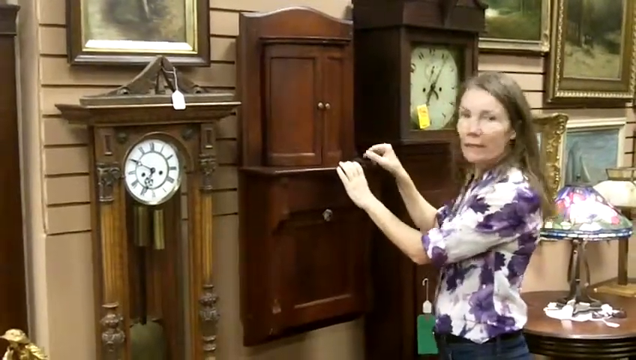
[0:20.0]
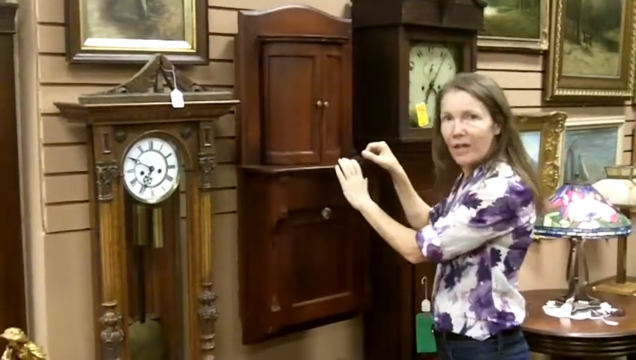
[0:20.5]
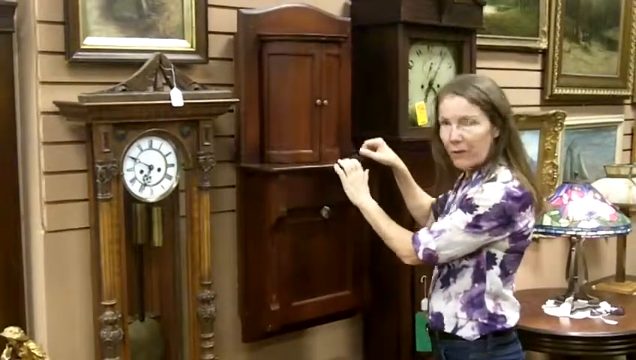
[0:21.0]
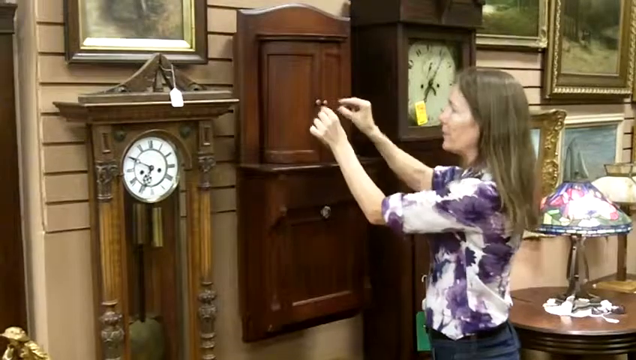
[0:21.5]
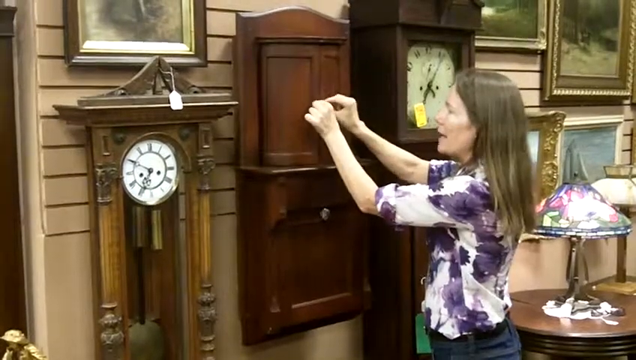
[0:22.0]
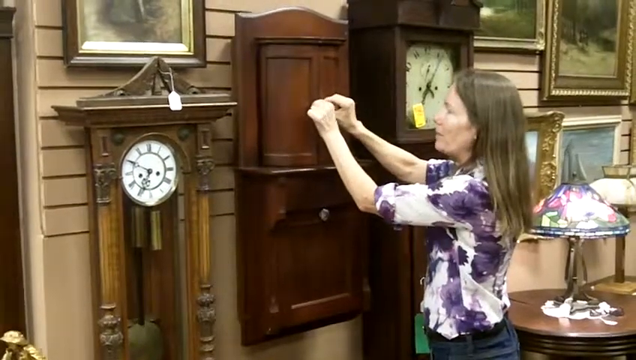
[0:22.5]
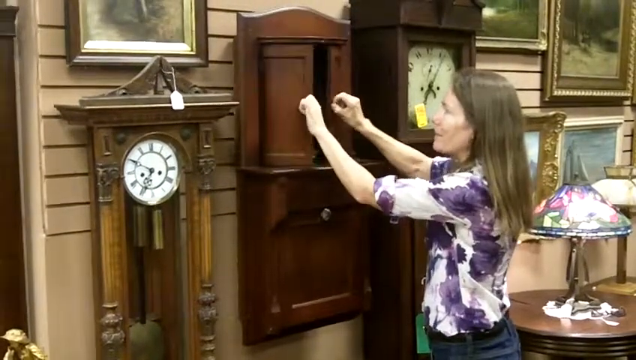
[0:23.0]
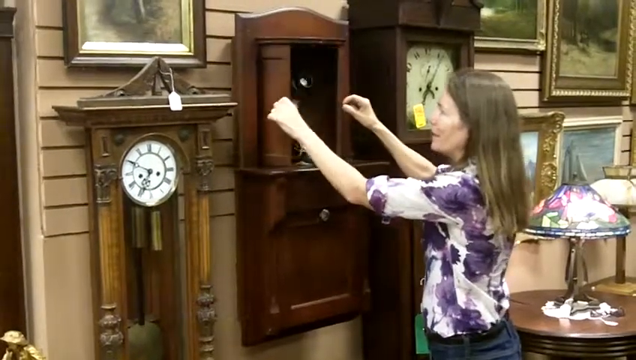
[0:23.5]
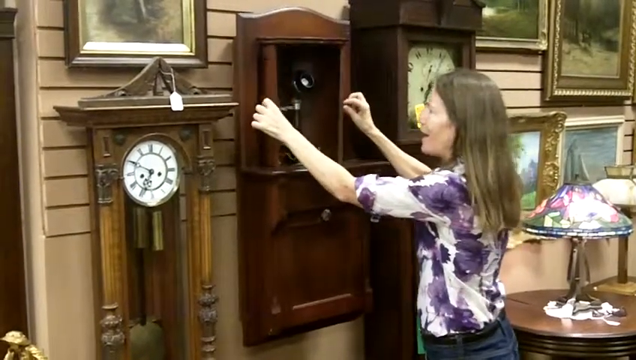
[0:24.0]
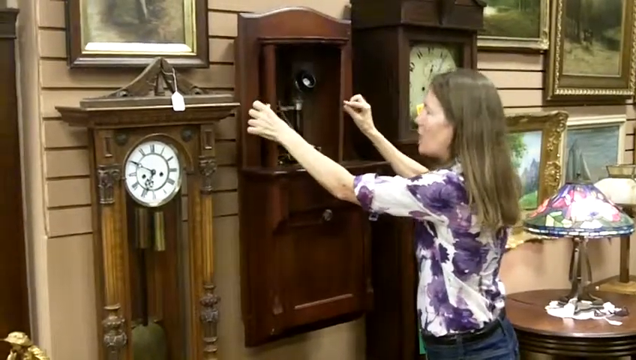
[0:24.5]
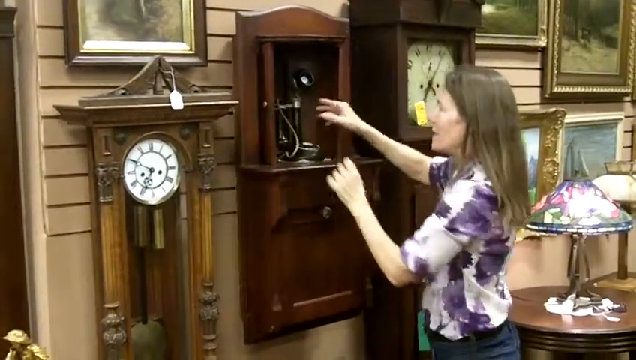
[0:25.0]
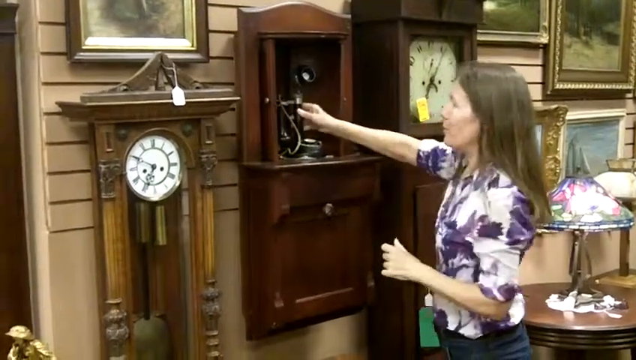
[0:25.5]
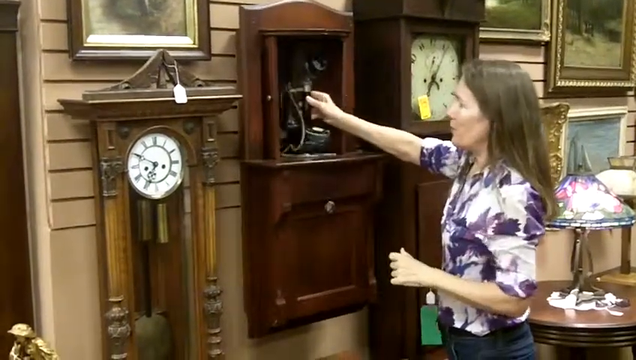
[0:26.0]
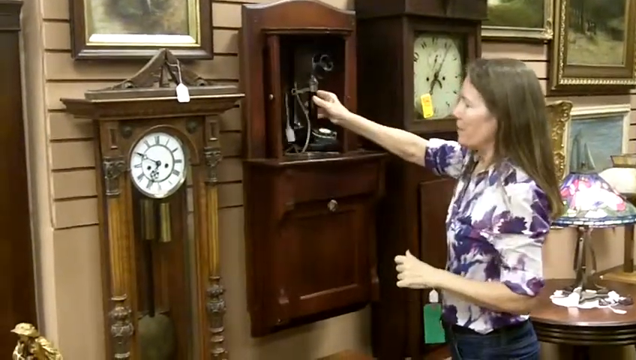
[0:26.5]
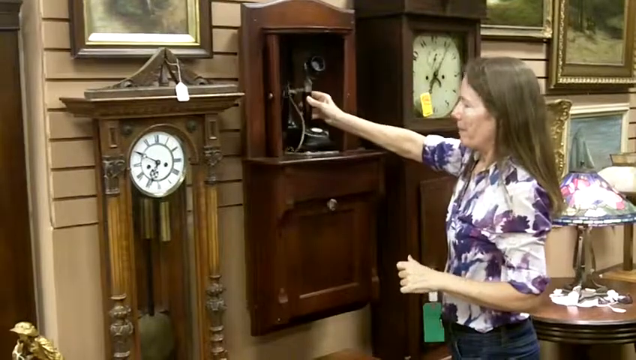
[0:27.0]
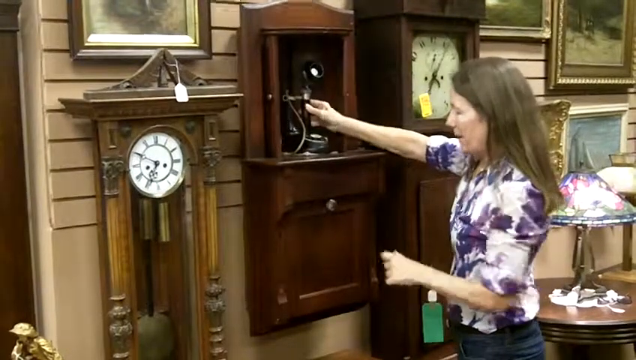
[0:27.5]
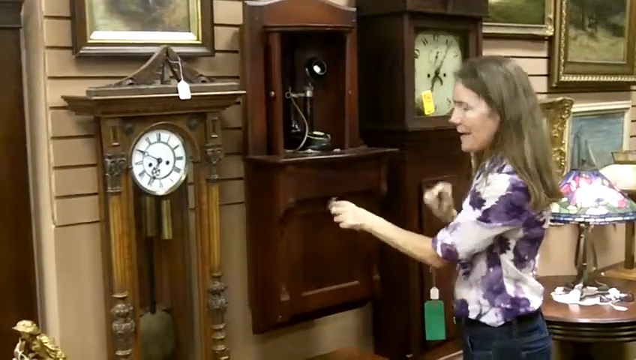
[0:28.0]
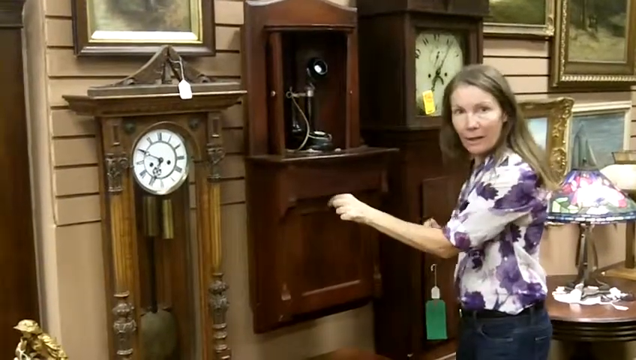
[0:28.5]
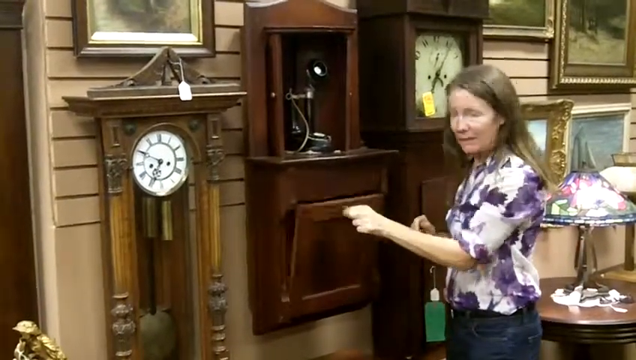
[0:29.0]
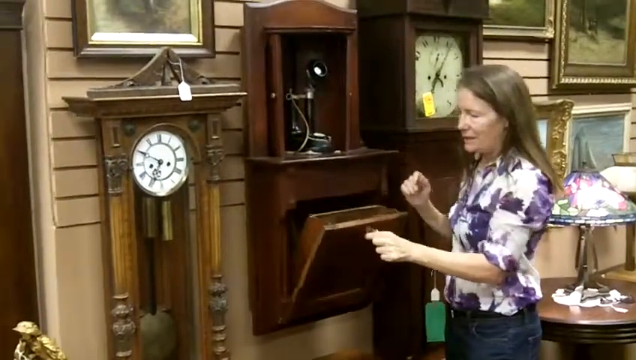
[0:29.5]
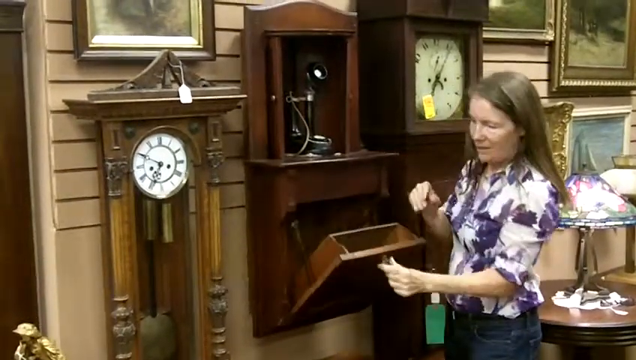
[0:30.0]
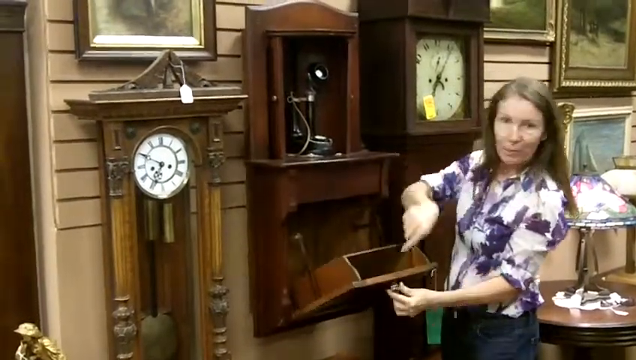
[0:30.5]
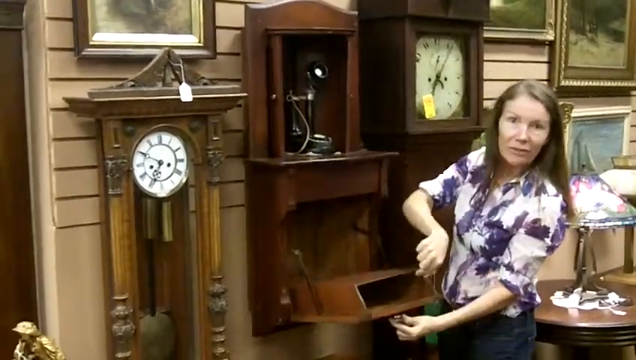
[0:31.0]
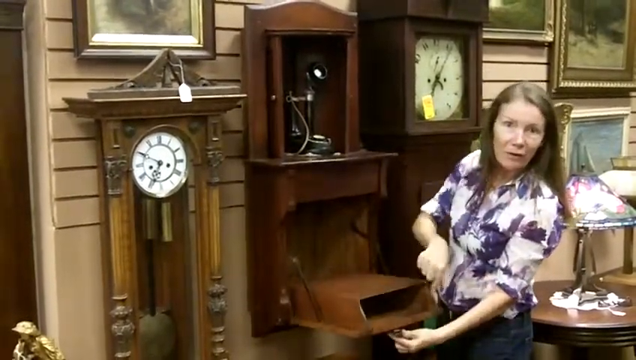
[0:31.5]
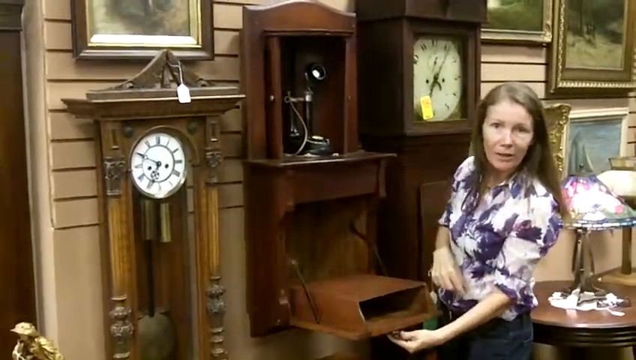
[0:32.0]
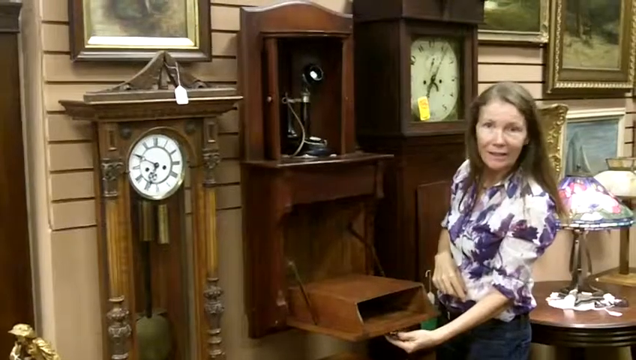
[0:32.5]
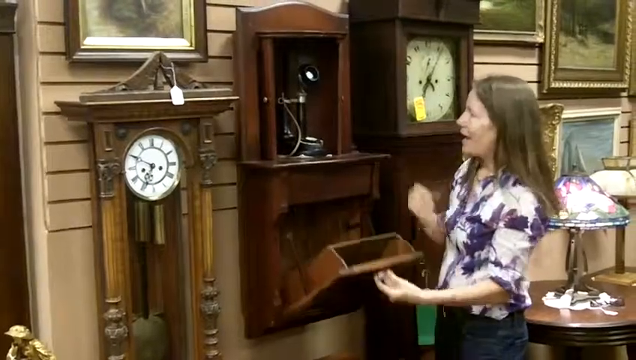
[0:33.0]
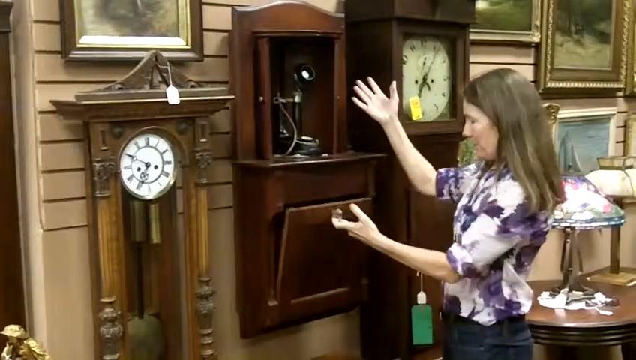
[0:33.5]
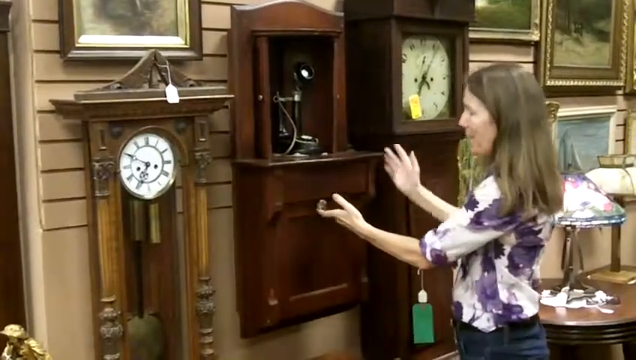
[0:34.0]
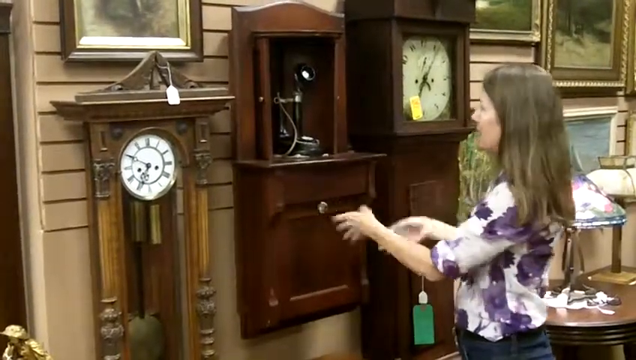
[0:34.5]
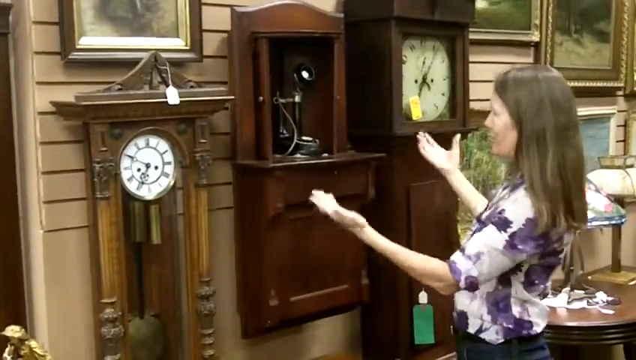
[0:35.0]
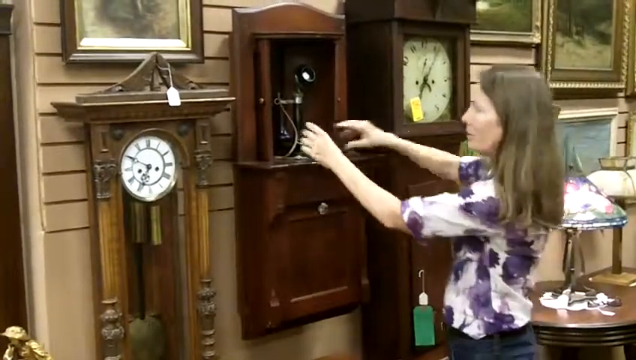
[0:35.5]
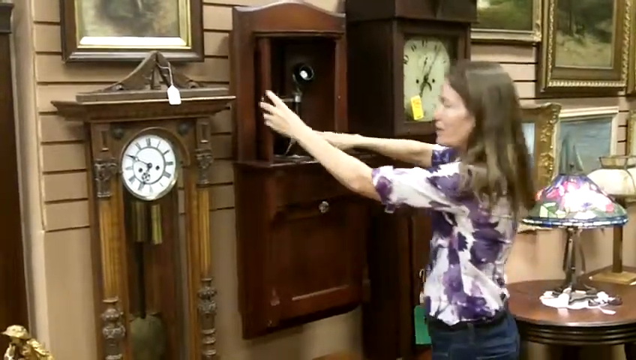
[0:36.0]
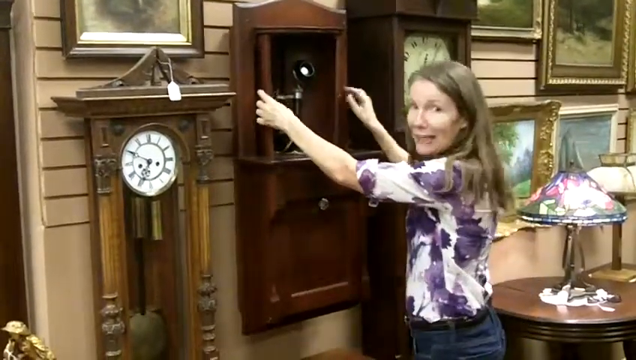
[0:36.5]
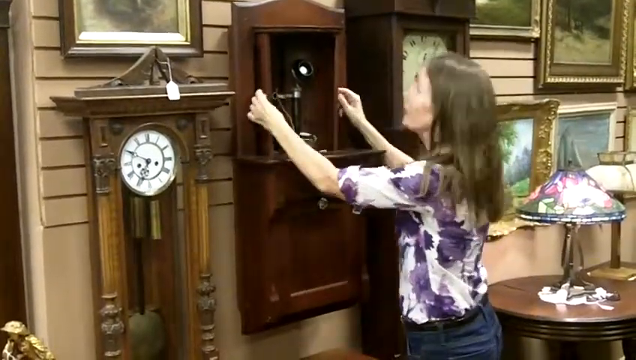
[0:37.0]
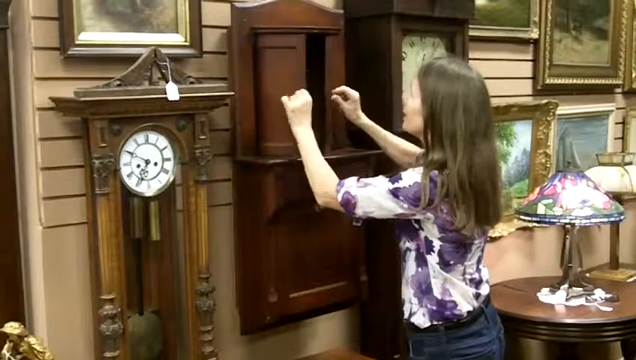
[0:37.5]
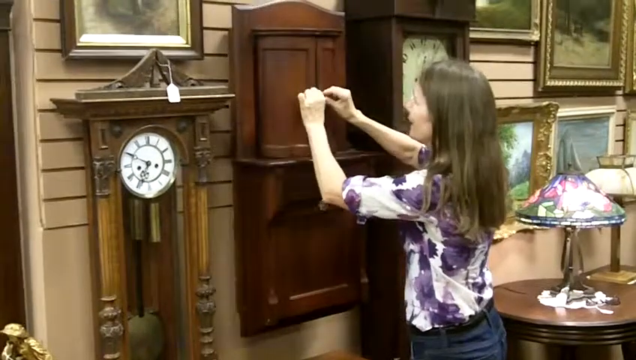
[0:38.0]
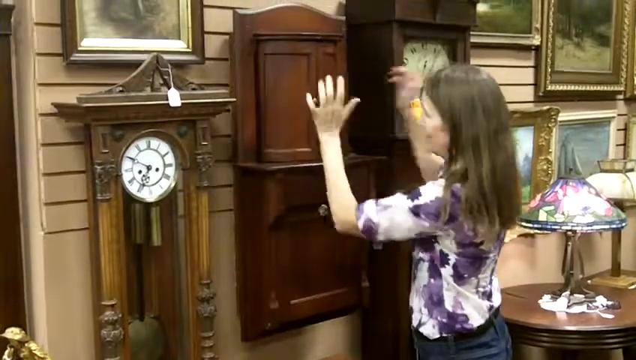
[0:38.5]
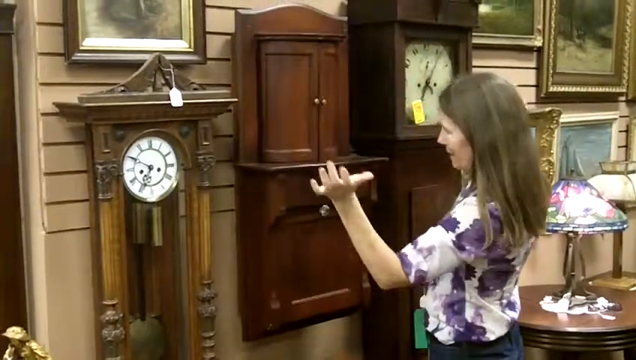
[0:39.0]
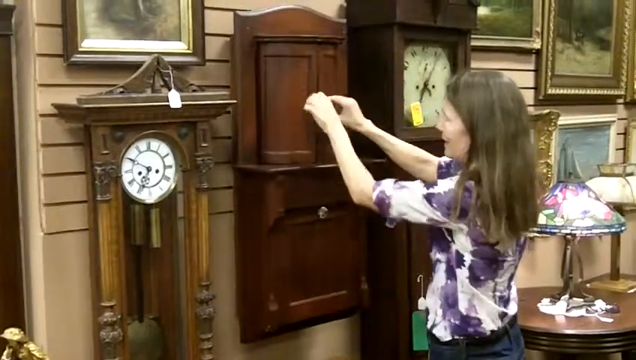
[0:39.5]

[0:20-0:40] A woman holds what seems to be a small cupboard with two levels, one at the bottom and one at the top. She keeps talking as she opens it, revealing an item inside, then opens the lower part, where there is a bottom shelf. The shelves are different sizes, with one on top and one below. On the table there is a lamp with different colors, including purple. The woman is white, with long hair, and wears a white shirt with purple on it. In the background there are many things made of wood, and framed pictures are mounted on the wall.